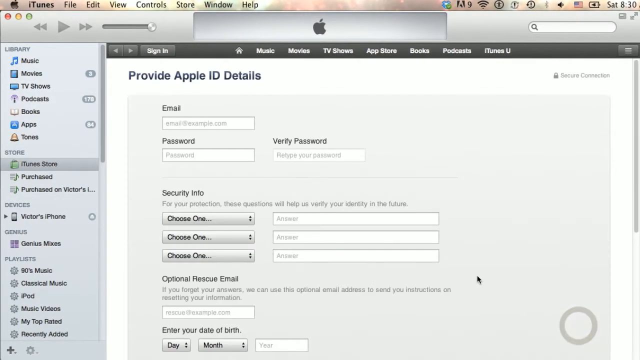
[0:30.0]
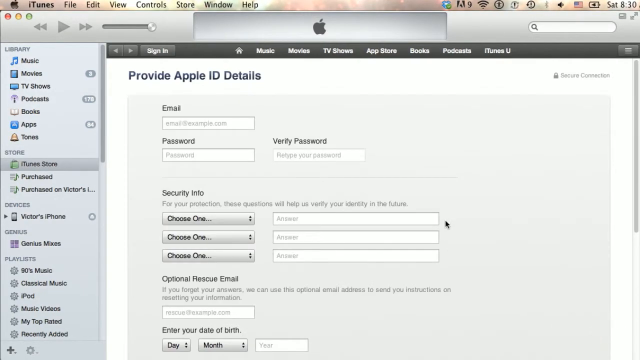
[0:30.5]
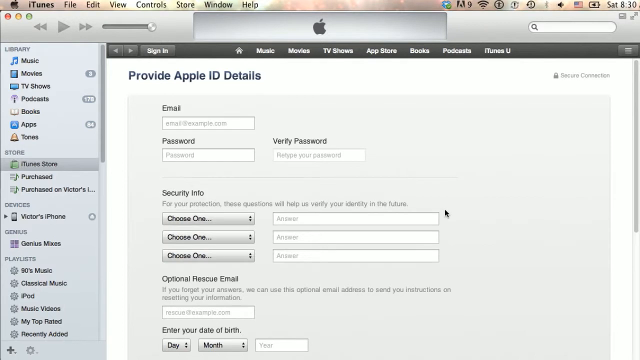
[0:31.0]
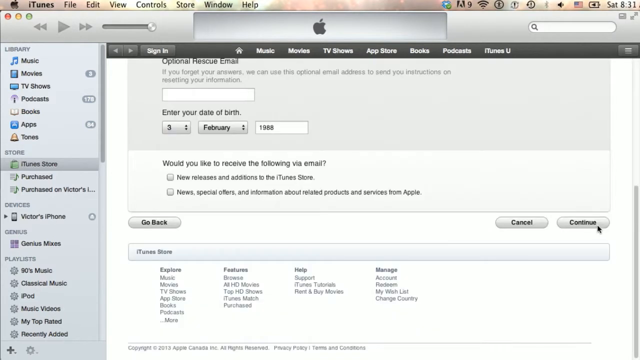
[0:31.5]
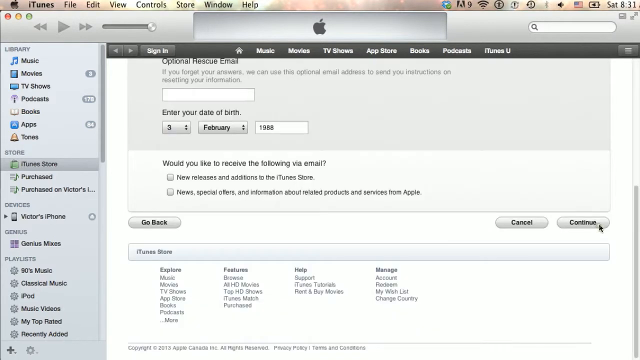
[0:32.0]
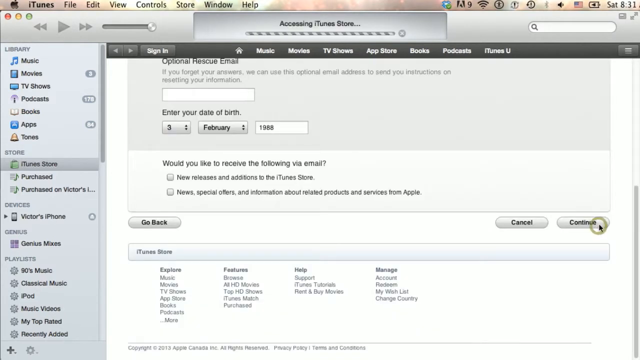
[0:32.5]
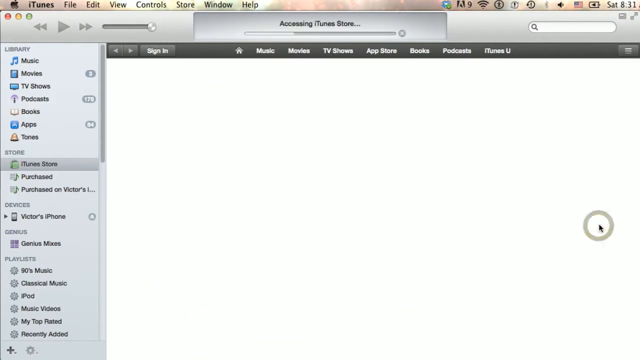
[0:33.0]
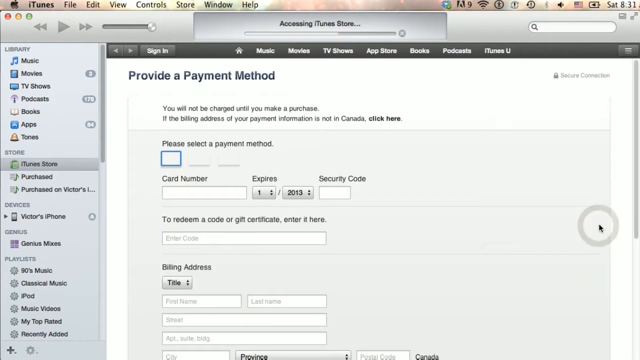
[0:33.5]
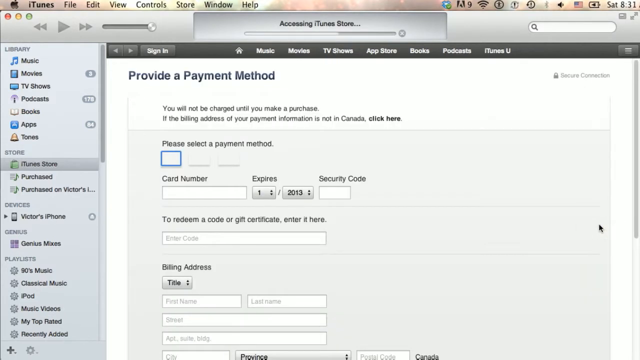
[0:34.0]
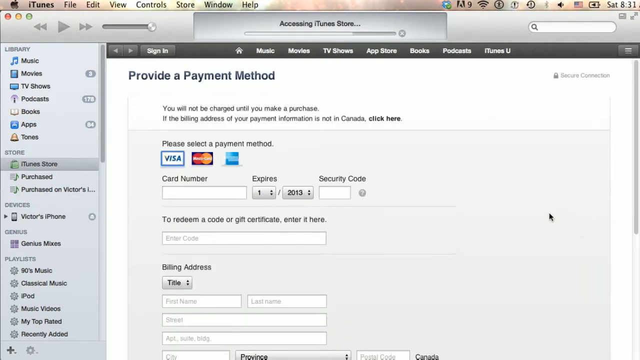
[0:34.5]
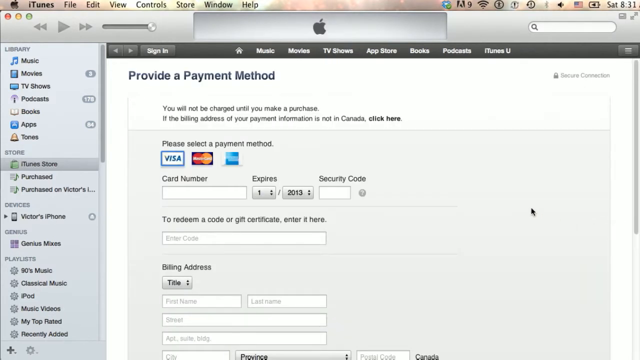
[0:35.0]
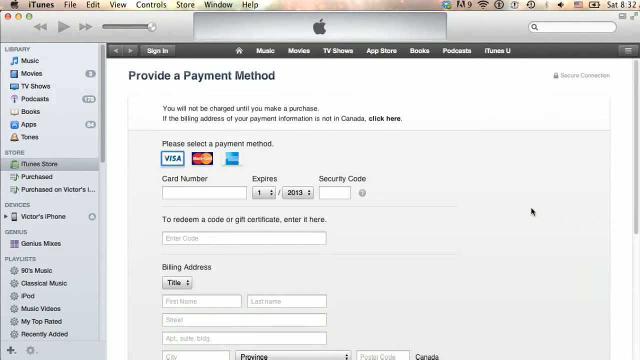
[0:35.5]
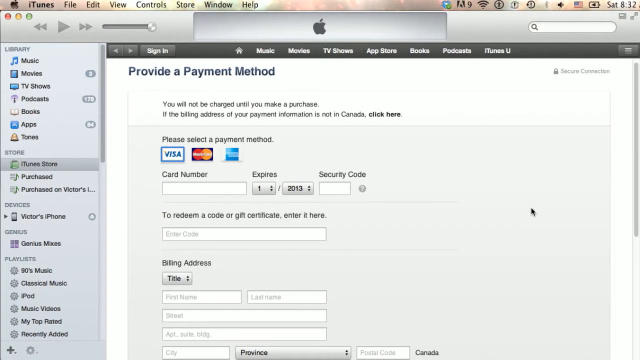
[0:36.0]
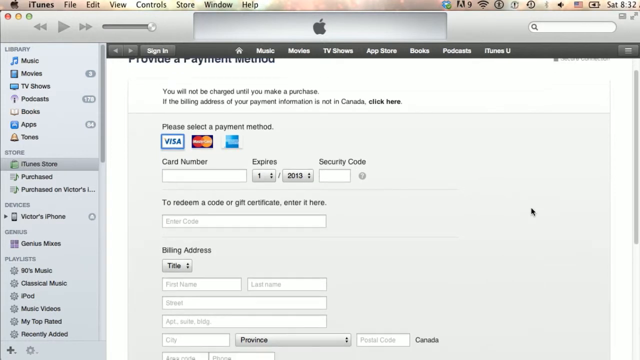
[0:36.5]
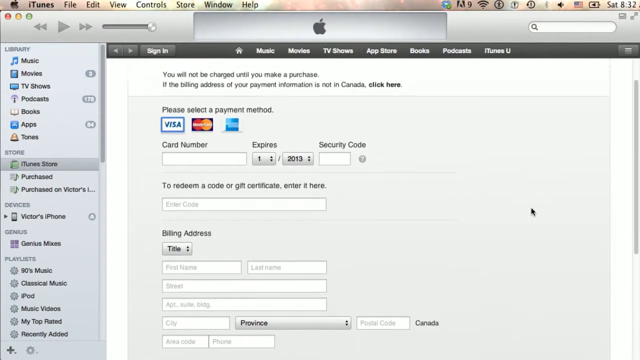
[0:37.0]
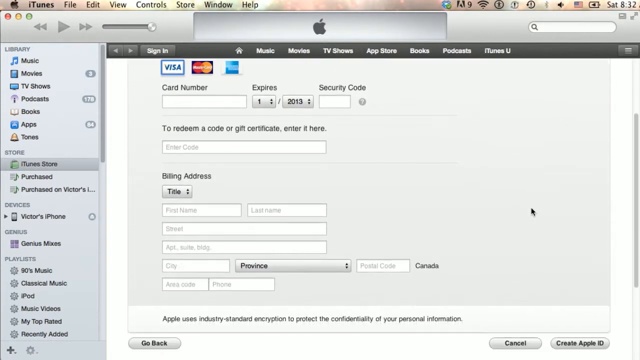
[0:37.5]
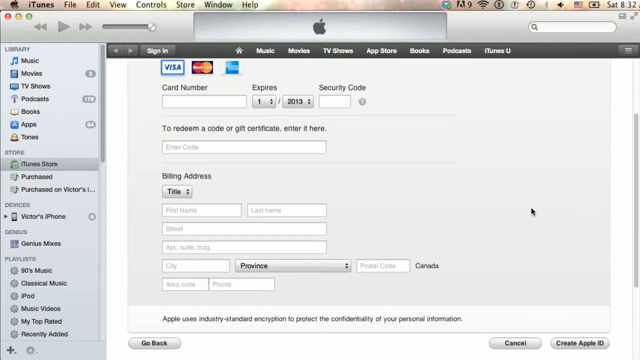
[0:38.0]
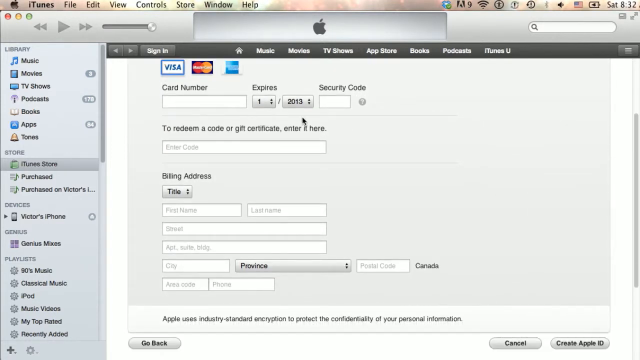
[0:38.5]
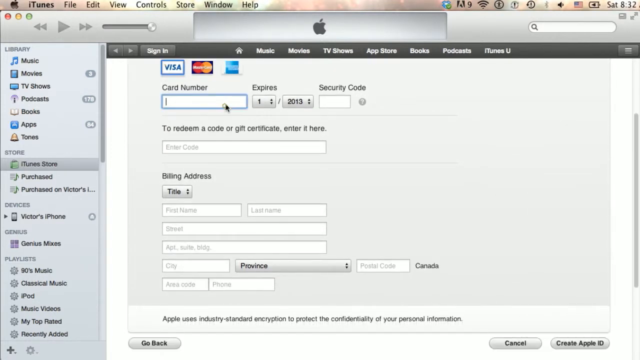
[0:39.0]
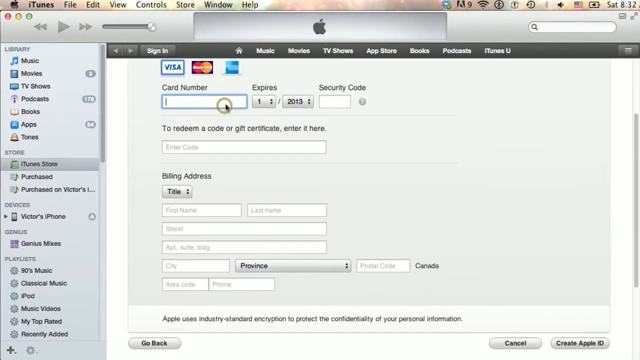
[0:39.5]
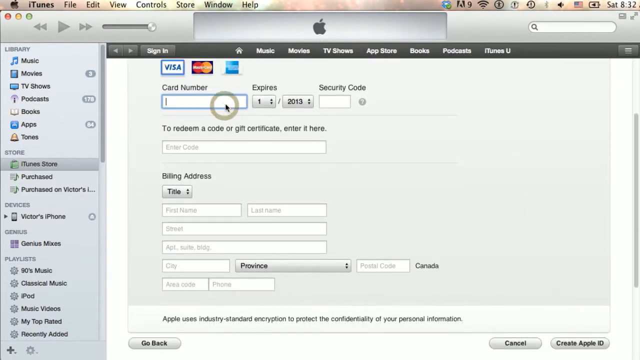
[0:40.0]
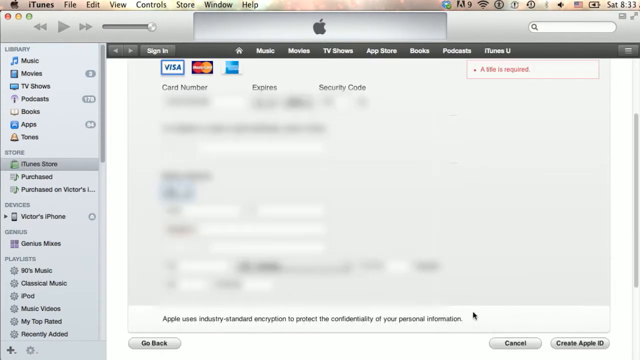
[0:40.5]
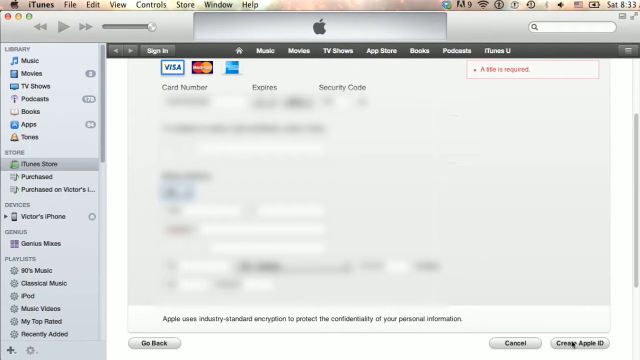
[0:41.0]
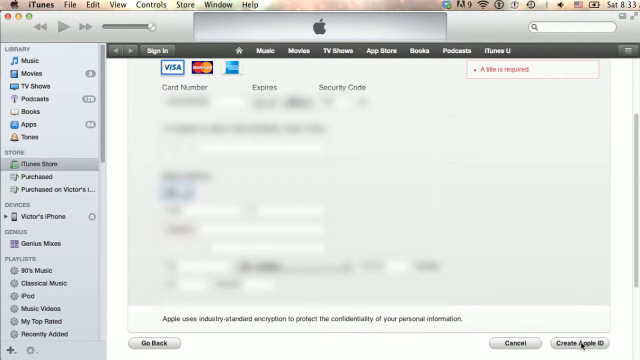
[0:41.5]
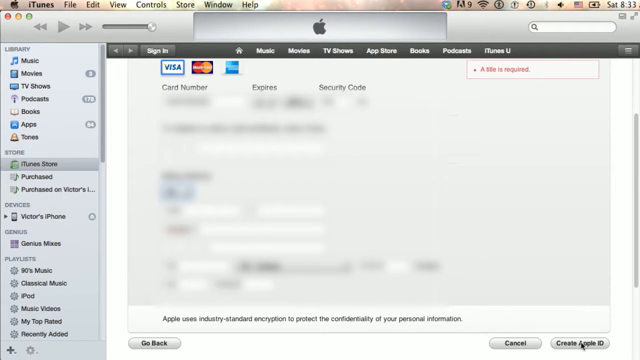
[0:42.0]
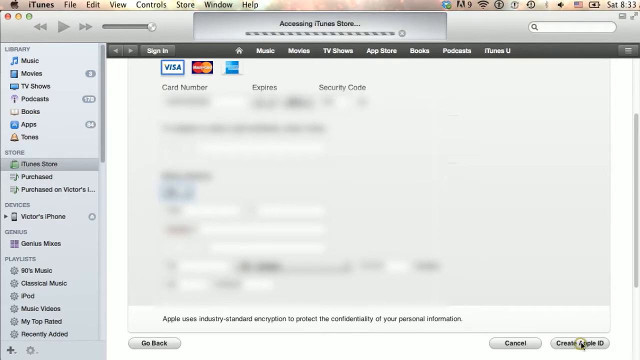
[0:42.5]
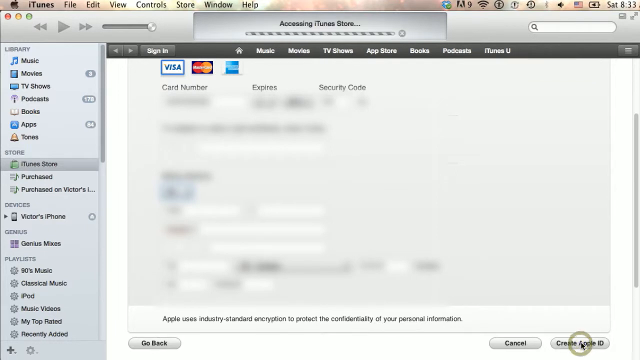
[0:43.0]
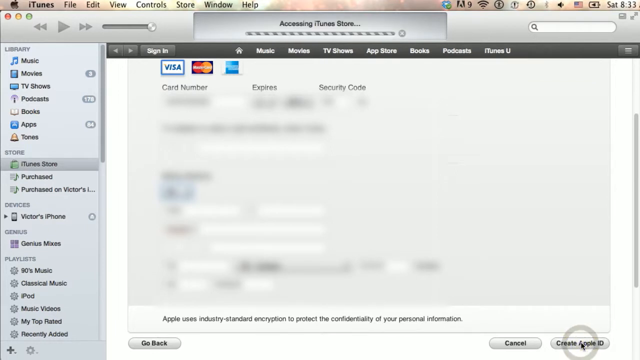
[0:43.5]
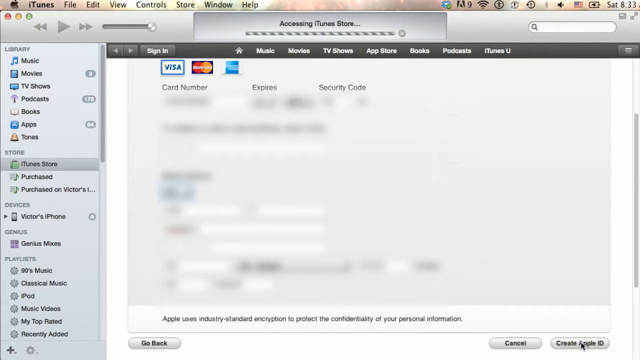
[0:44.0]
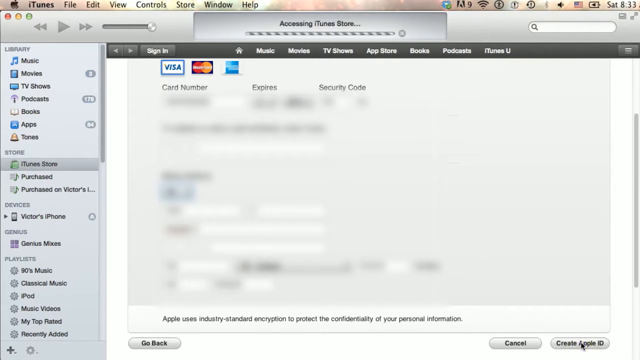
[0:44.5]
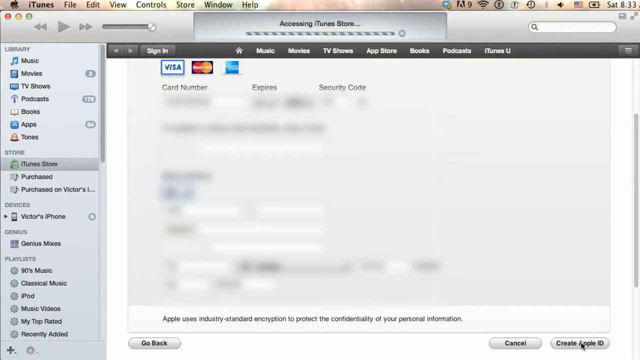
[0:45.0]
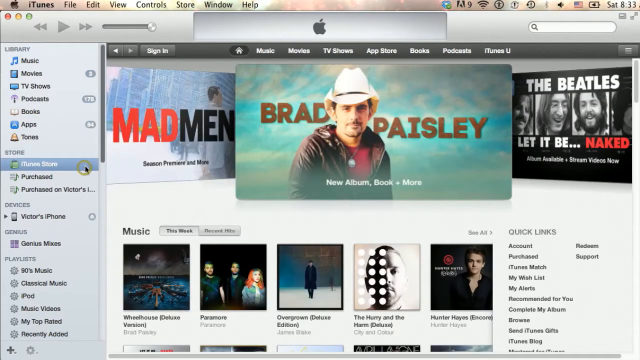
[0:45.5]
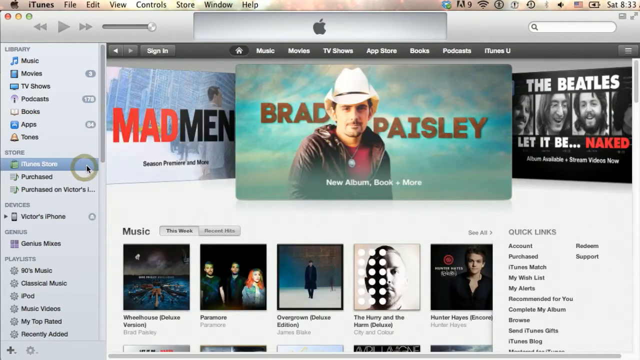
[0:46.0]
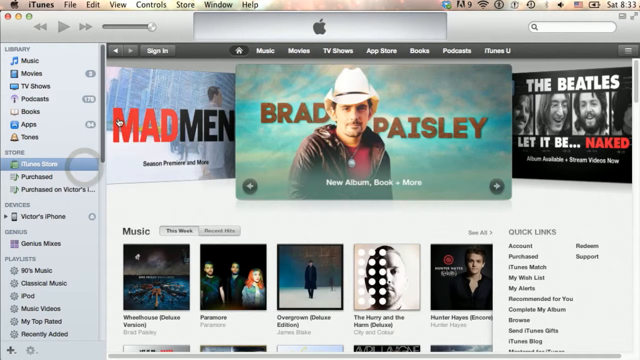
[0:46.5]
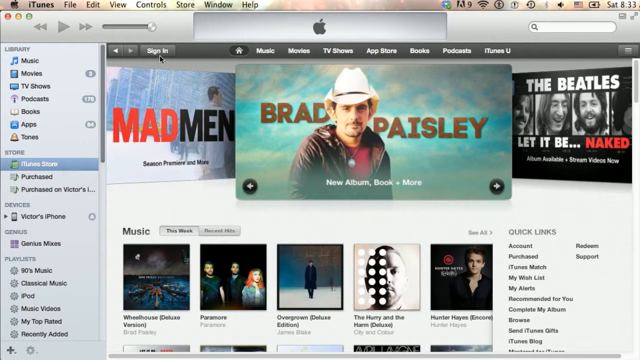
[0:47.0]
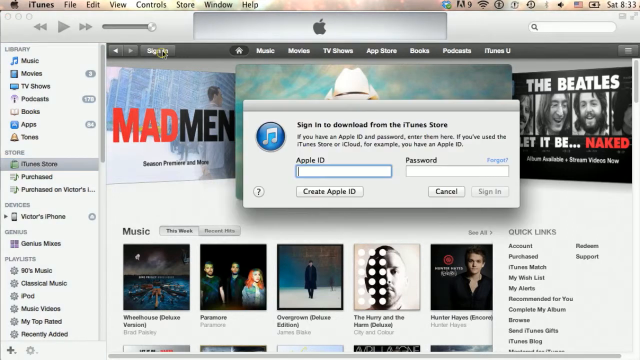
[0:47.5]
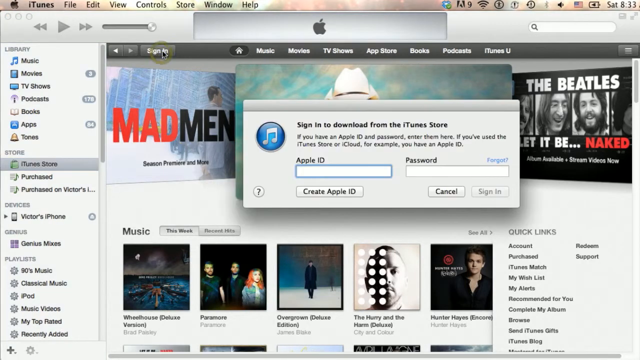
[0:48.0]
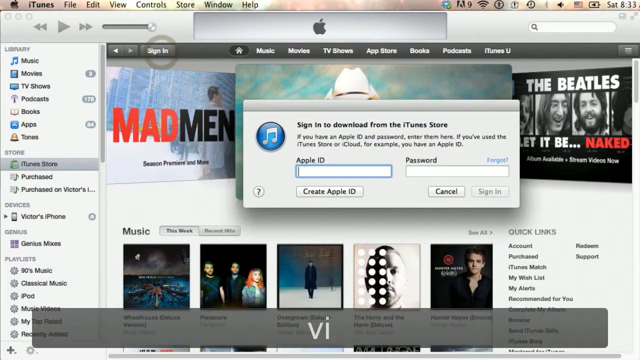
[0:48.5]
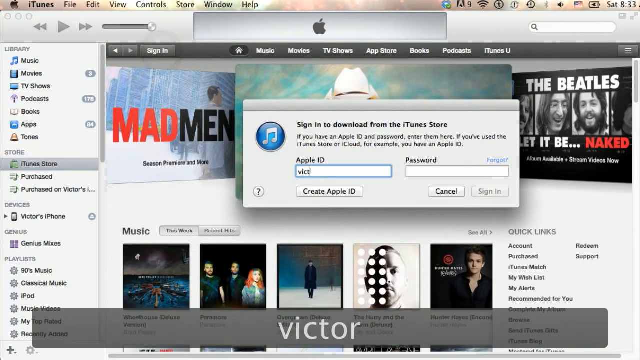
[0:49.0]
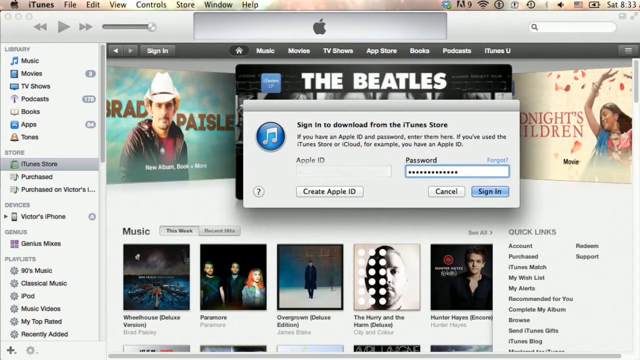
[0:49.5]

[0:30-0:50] What looks like the iTunes application is shown on an Apple device, with the Apple navigation bar at the top listing iTunes, File, Edit, View, Control, Store, Windows and Help. The screen shows "Provide Apple ID Details" with prompts for email, password, verify password, security info, optional rescue email, and enter your birthday at the bottom. The black cursor moves up, apparently goes all the way down, and presses Continue at the bottom right. The top then reads "Provide a Payment Method," with a request to select a payment method, a card number field, an option to redeem a code, and billing address. The view apparently scrolls down, and the cursor clicks on the card number prompt. Everything then becomes blurred out, apparently after the information has been filled in. The cursor goes to a "Create Apple ID" button at the bottom right and clicks it. The video then transitions to the iTunes store, where the cursor clicks iTunes Store on the left side and then the sign-in button at the top left. A pop-up reads "sign-in to download from iTunes Store"; the mouse clicks the Apple ID field, "V-I-C-T" is typed and then blurred out. The password field is also filled in, and the mouse clicks the sign-in button.